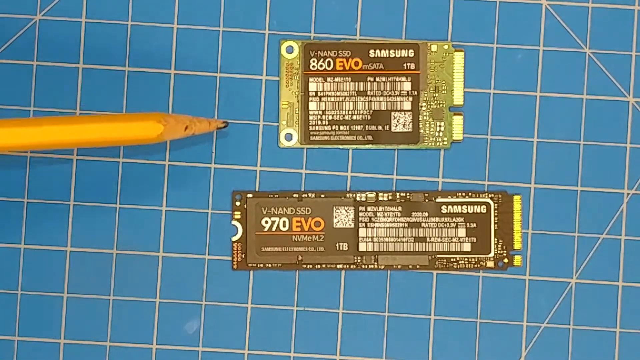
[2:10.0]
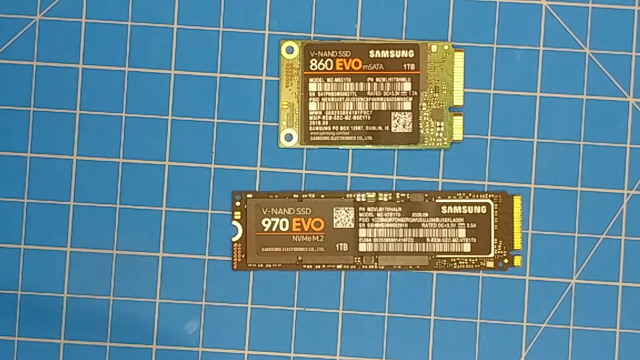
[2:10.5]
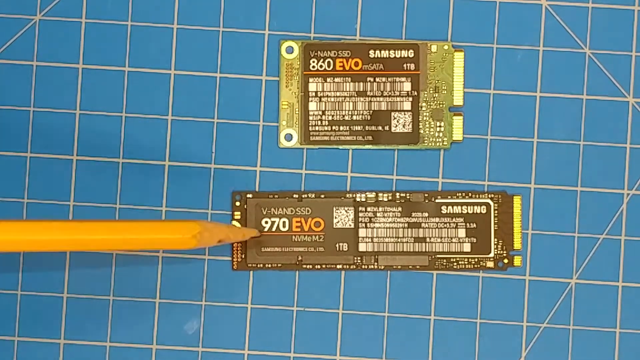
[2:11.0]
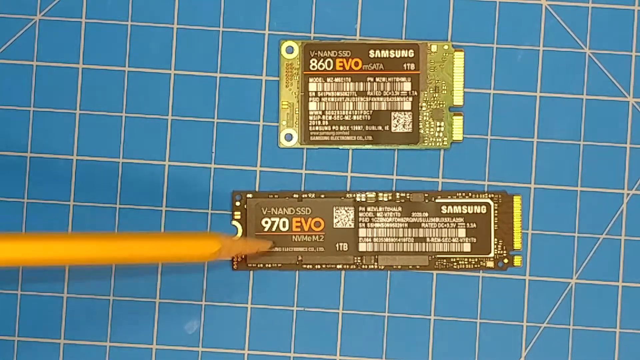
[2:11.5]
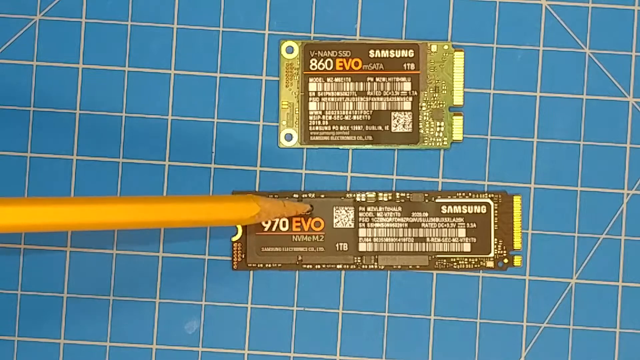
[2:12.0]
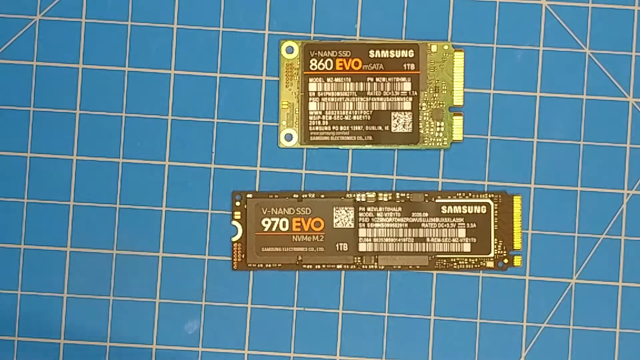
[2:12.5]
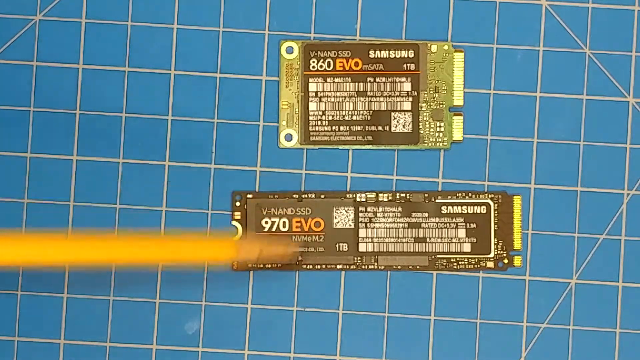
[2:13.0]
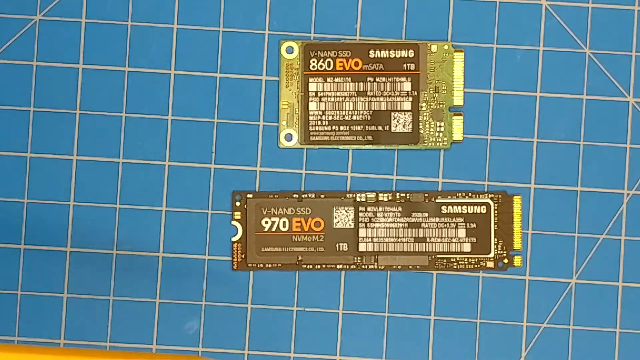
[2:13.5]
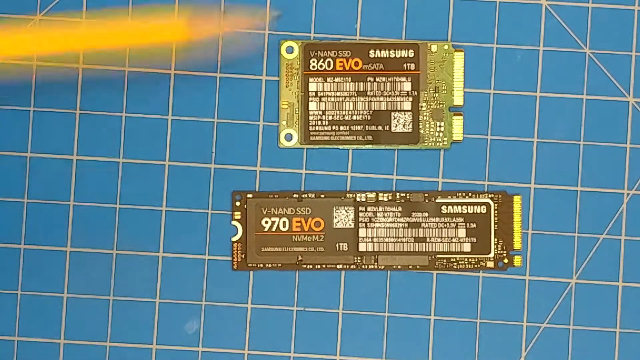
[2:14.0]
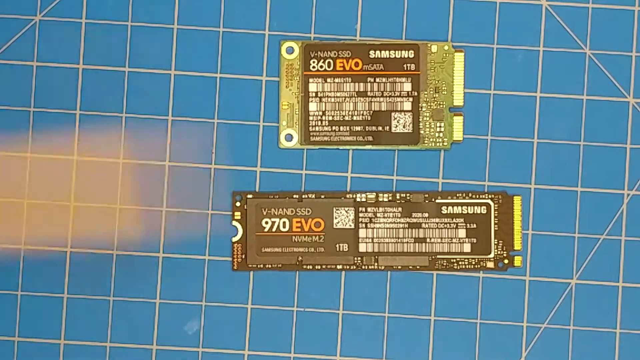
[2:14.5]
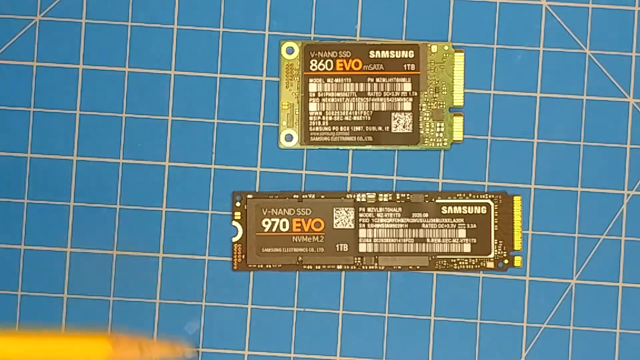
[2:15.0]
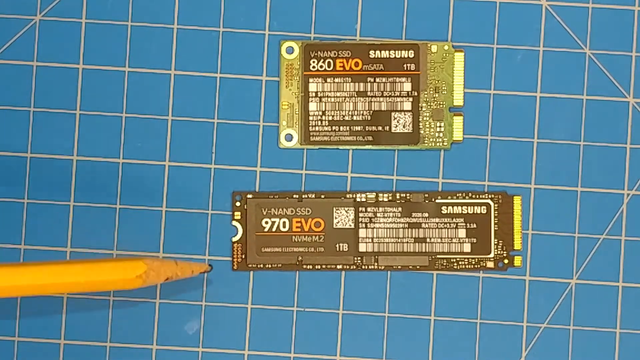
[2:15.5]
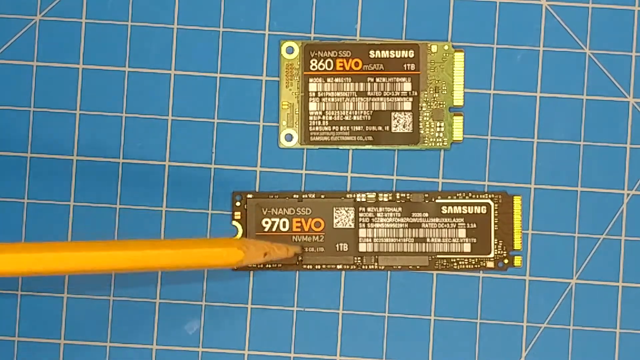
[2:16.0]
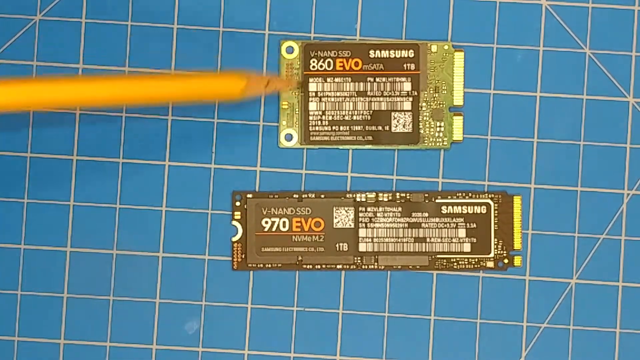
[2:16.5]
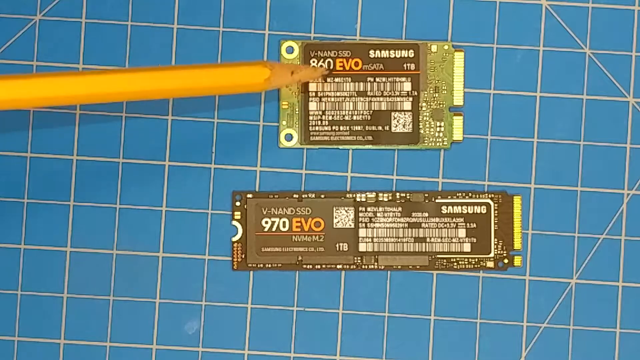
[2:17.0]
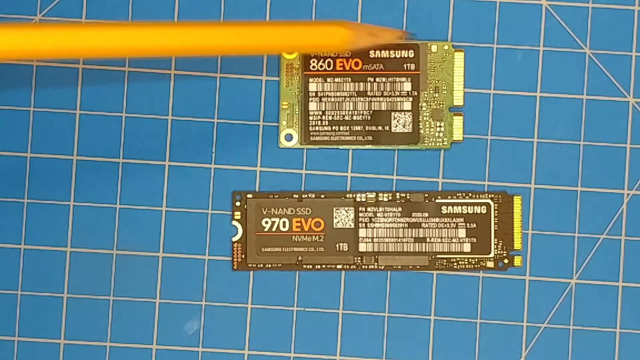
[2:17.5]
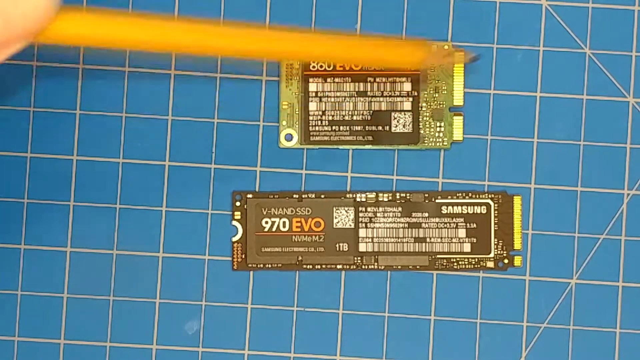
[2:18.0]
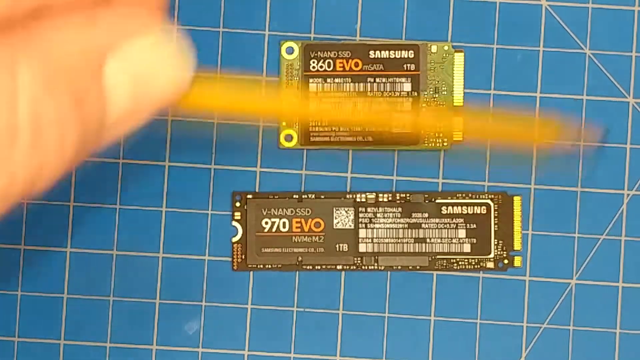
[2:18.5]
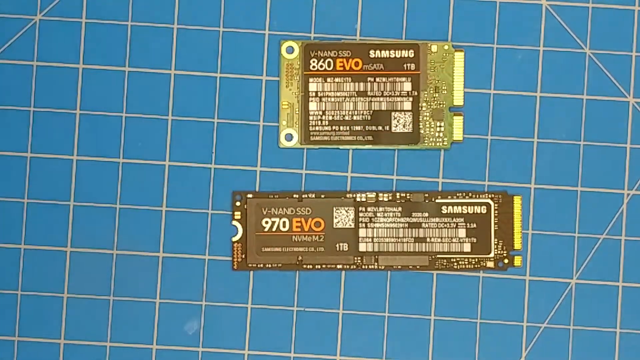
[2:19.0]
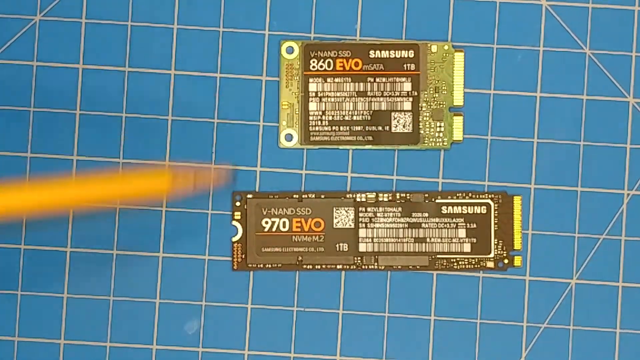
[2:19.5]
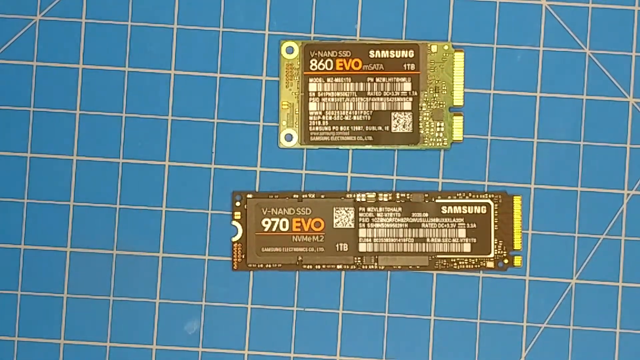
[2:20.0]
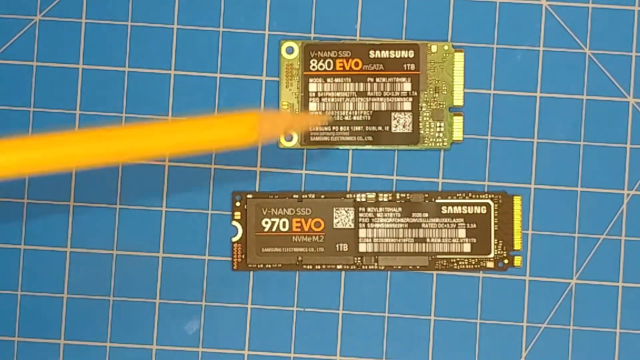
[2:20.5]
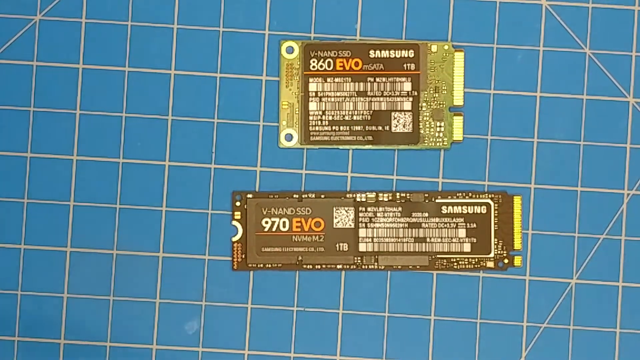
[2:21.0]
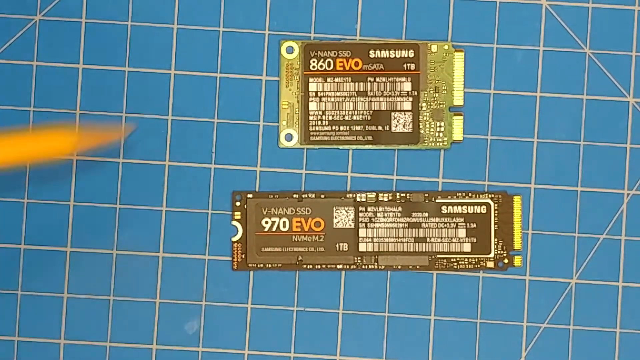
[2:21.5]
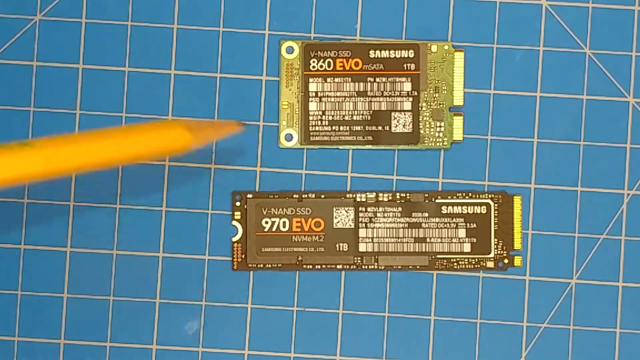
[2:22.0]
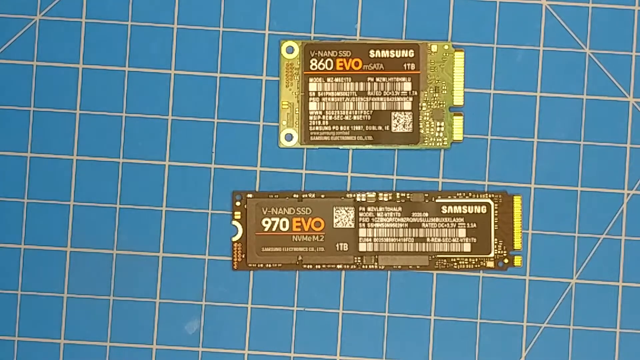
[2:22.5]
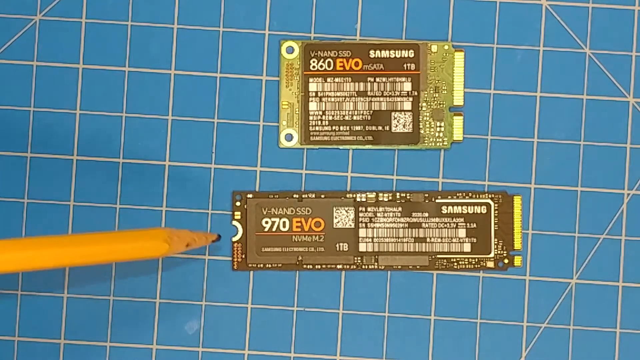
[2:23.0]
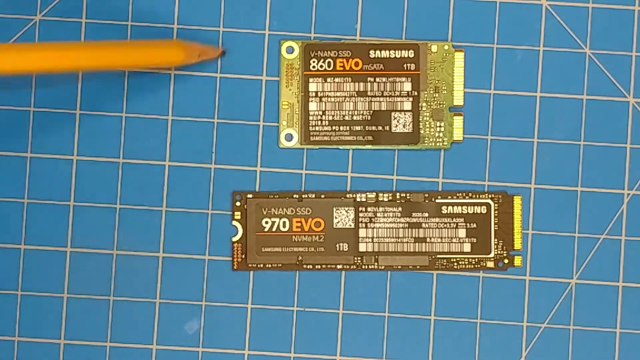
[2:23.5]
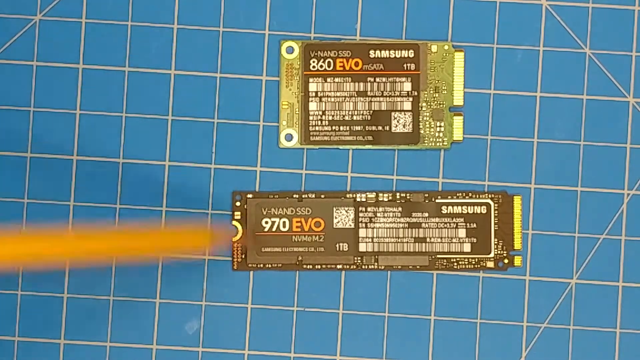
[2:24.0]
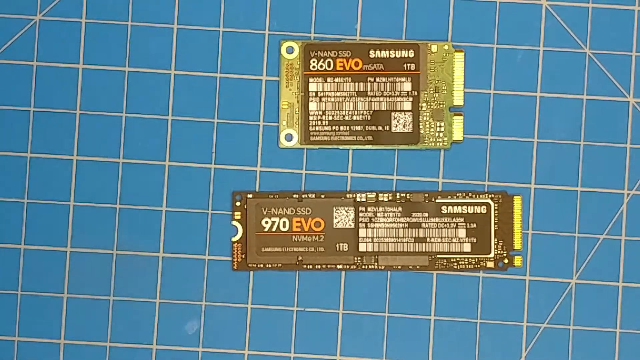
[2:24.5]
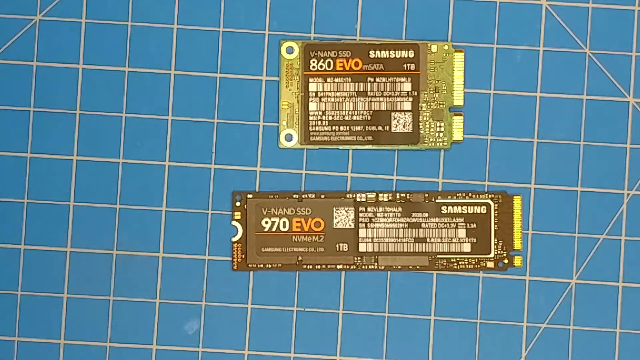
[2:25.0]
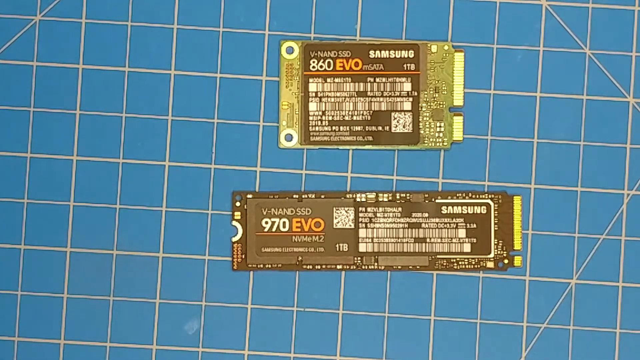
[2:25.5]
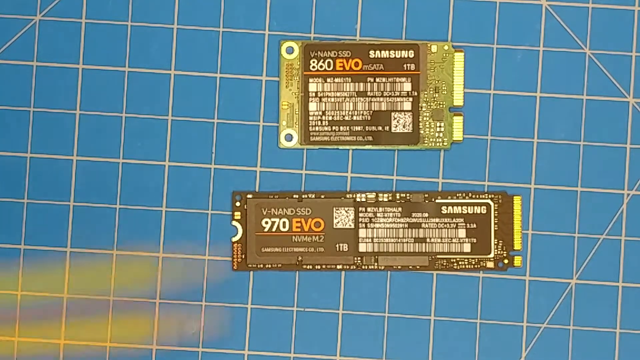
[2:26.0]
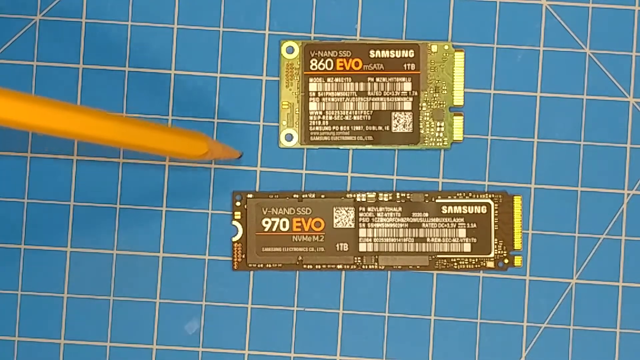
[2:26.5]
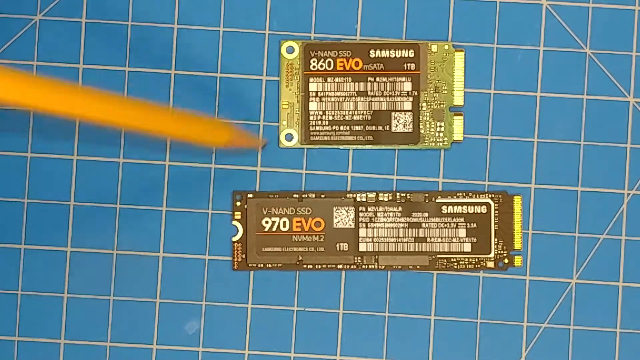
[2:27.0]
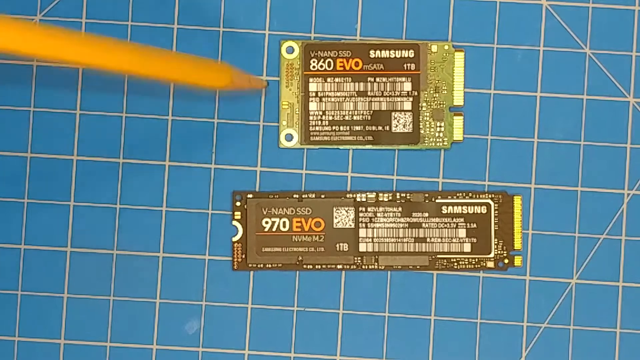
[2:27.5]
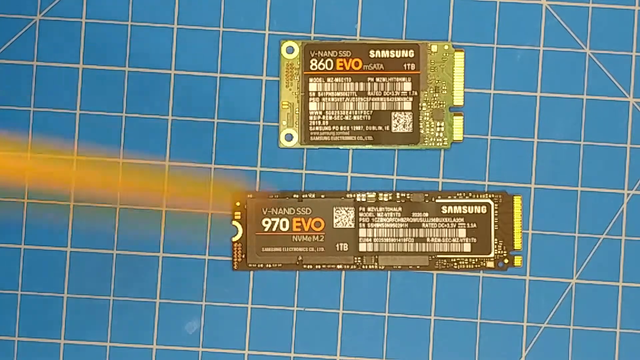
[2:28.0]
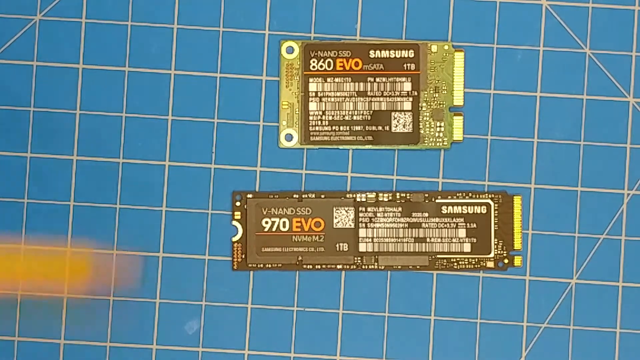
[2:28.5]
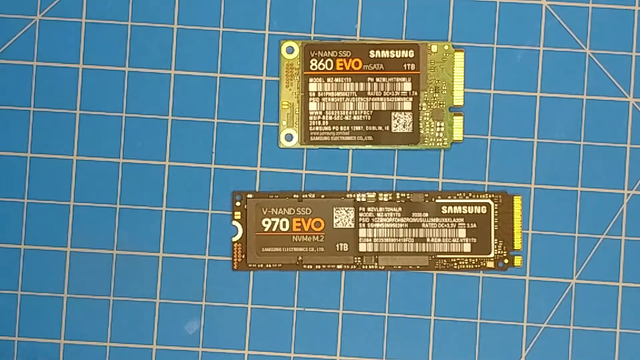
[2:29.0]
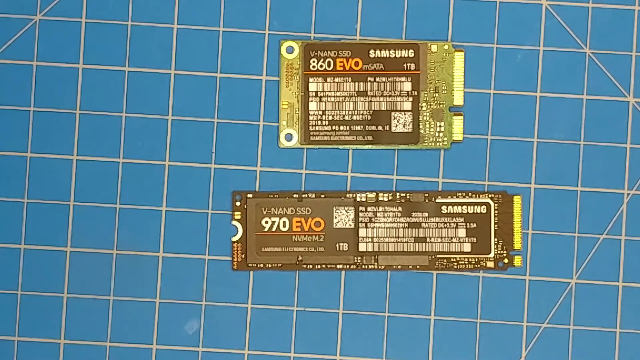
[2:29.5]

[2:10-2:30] The person is still holding the pencil. The chips lie on the blue tiles with nothing else around them. The person keeps tapping on the chips, seemingly most on the long one, the Samsung 970 EVO, but now goes back and forth between them with a fairly erratic tapping motion. Both chips show one terabyte each, and both are SSD-based chips.